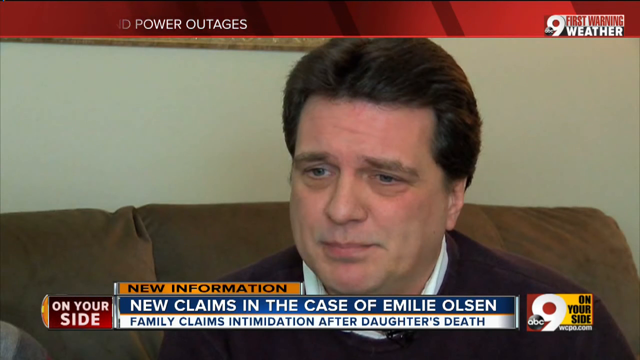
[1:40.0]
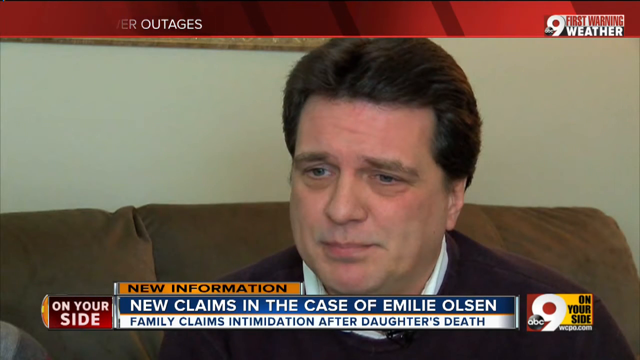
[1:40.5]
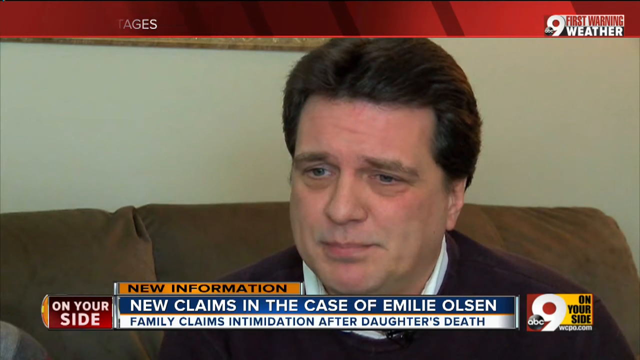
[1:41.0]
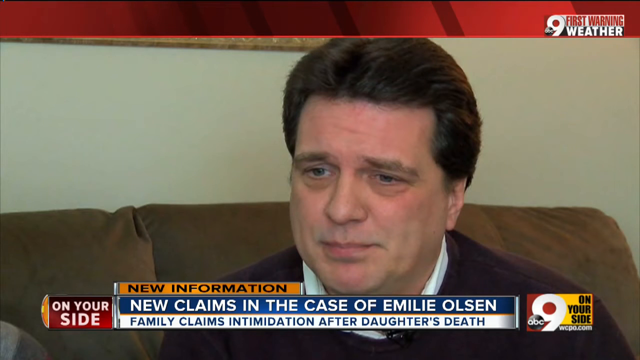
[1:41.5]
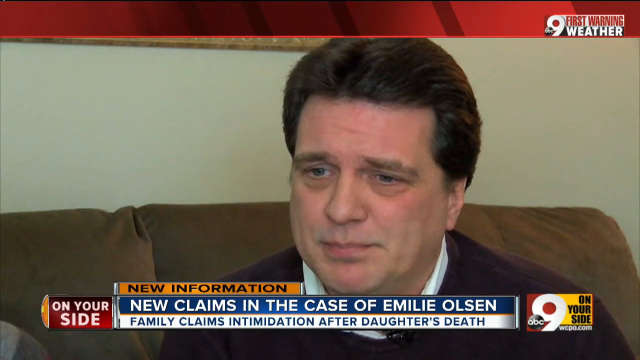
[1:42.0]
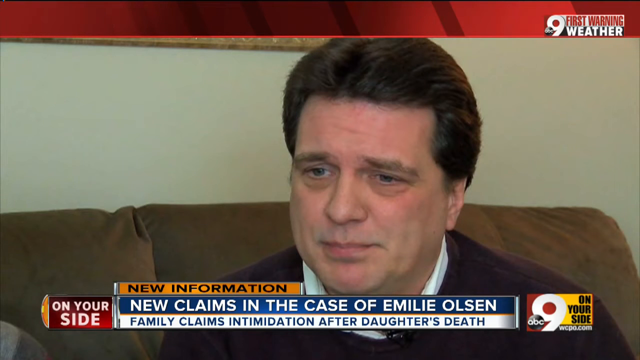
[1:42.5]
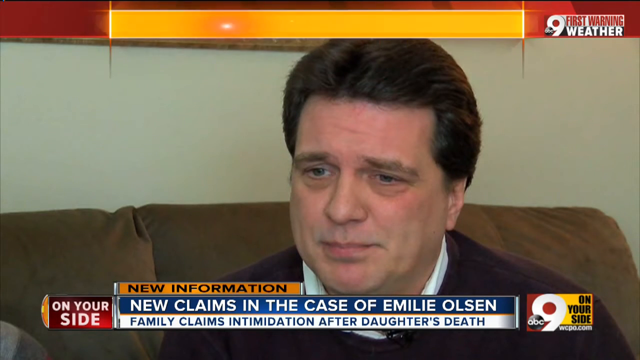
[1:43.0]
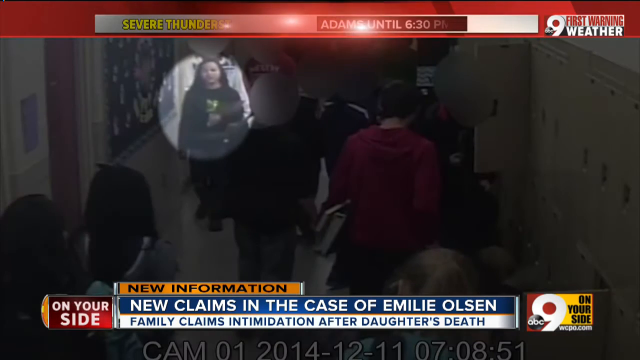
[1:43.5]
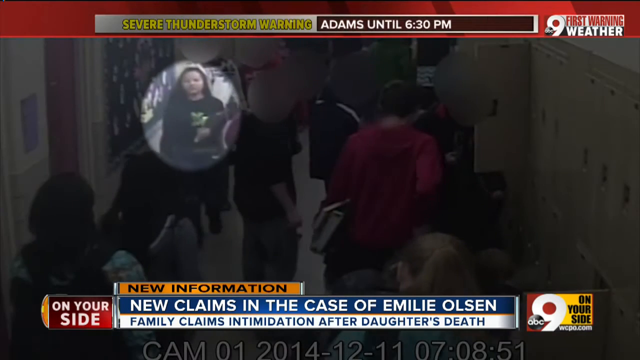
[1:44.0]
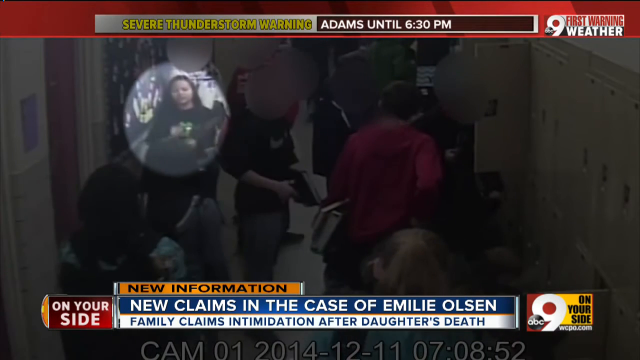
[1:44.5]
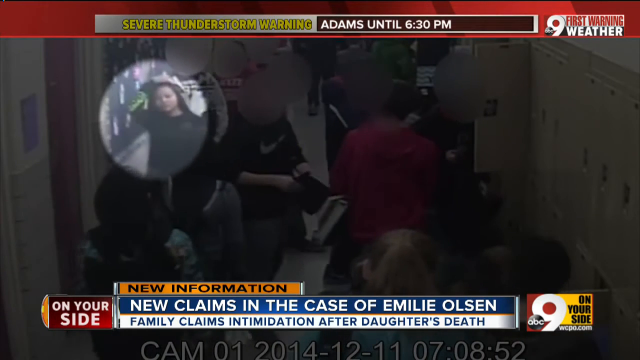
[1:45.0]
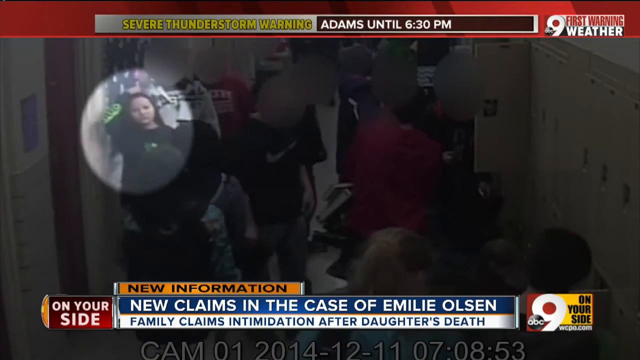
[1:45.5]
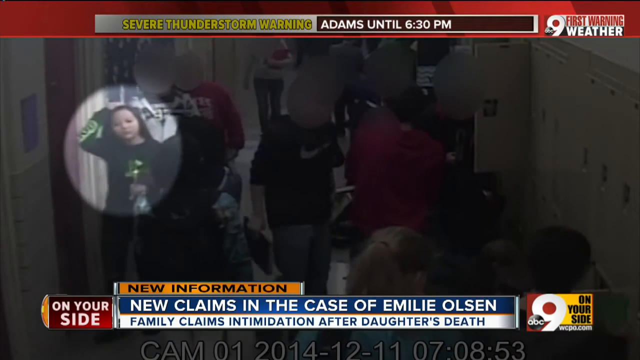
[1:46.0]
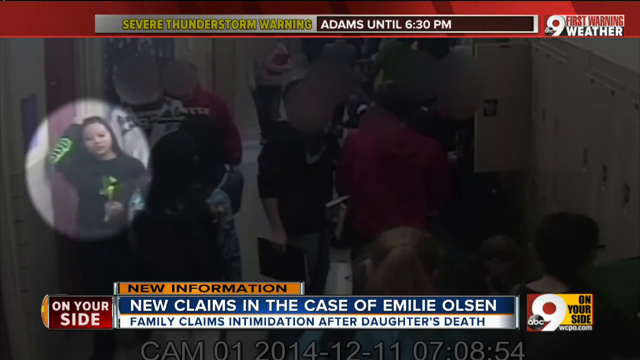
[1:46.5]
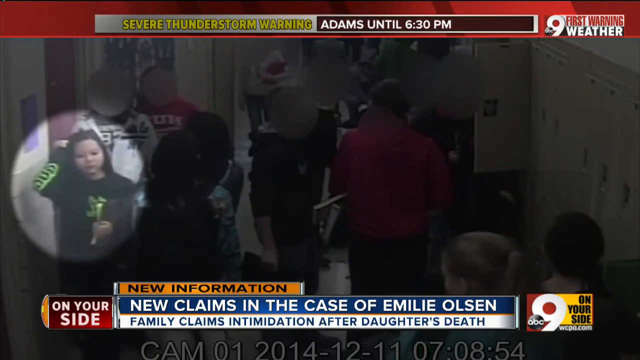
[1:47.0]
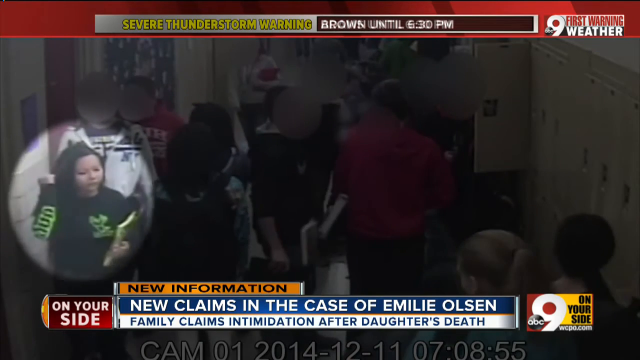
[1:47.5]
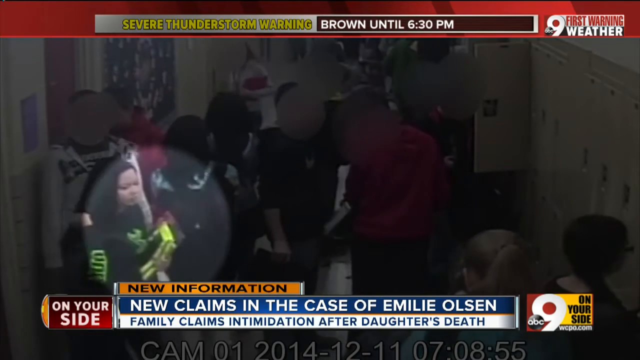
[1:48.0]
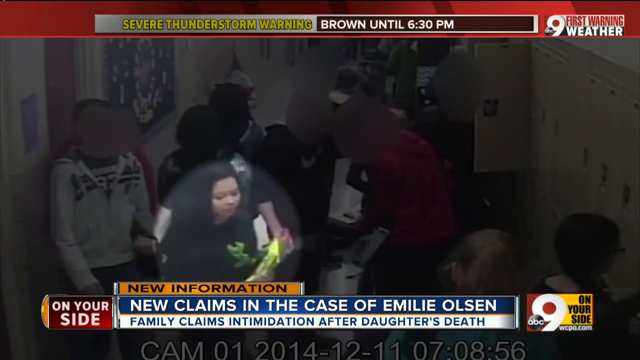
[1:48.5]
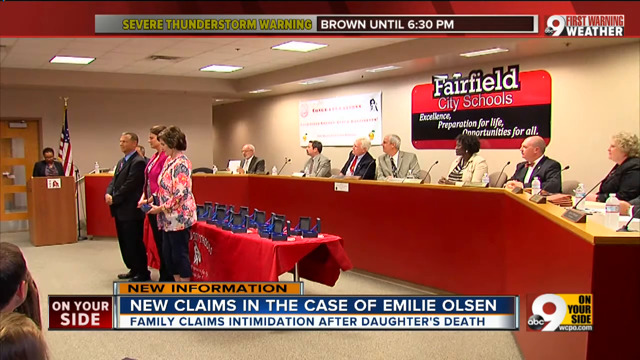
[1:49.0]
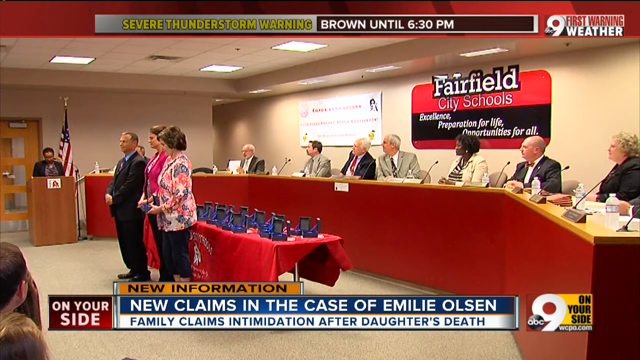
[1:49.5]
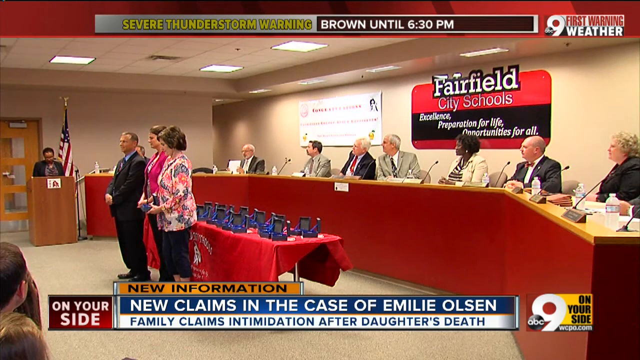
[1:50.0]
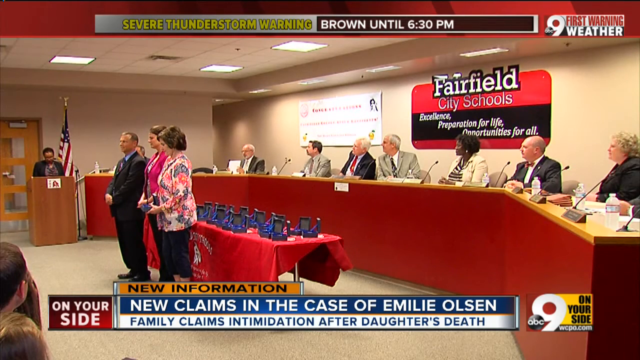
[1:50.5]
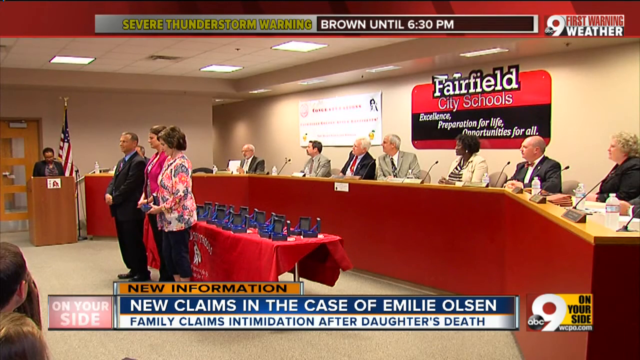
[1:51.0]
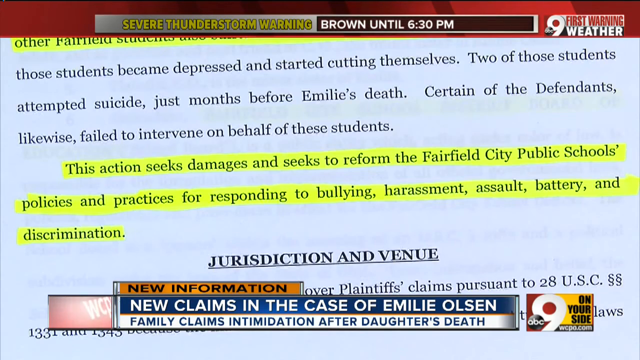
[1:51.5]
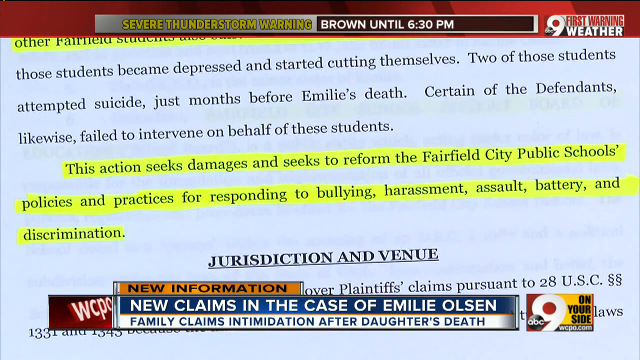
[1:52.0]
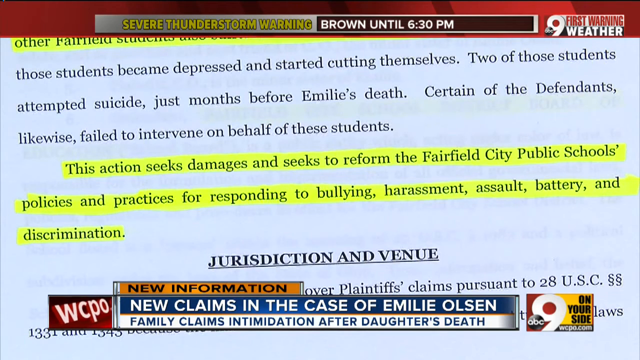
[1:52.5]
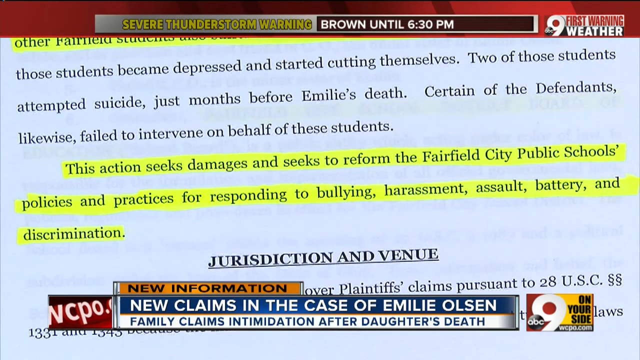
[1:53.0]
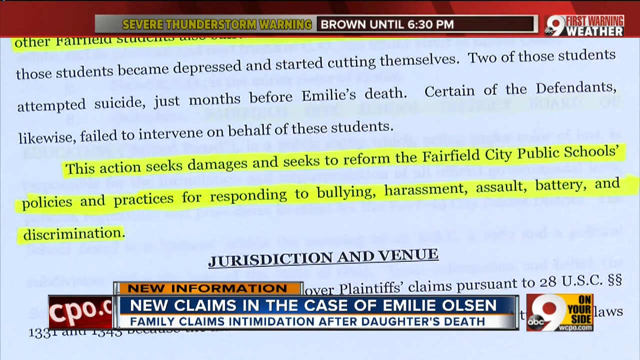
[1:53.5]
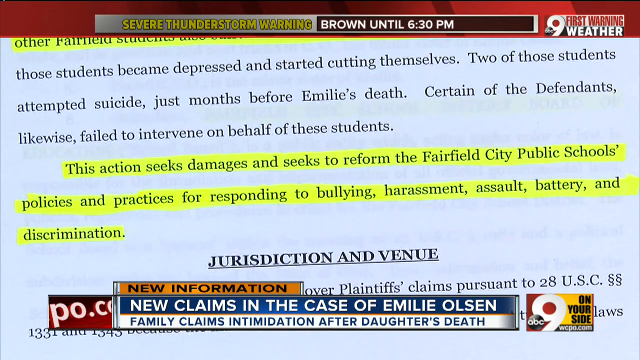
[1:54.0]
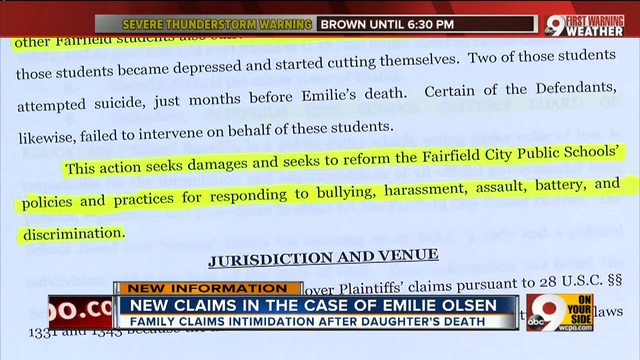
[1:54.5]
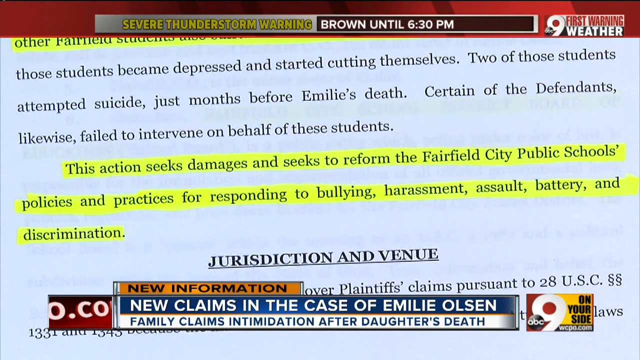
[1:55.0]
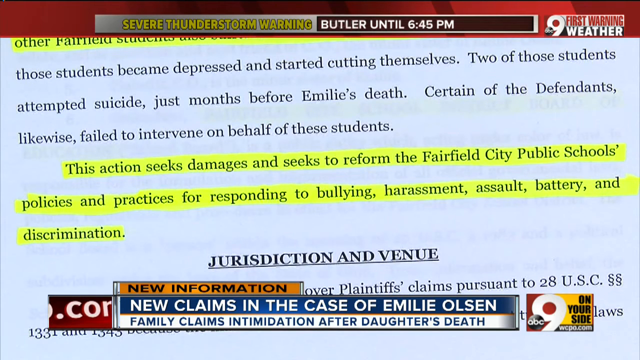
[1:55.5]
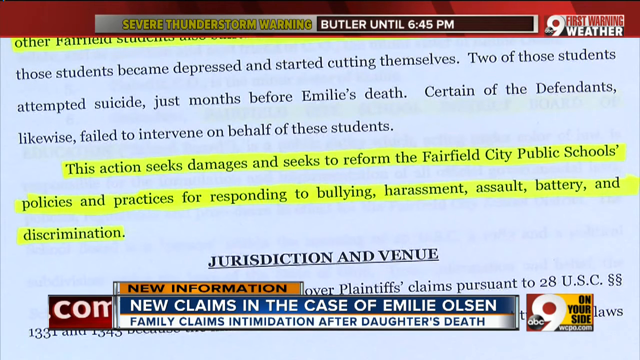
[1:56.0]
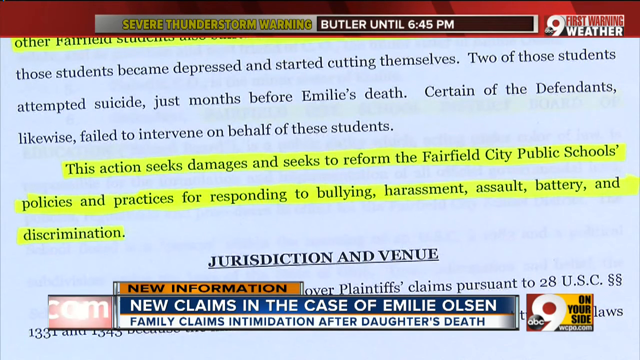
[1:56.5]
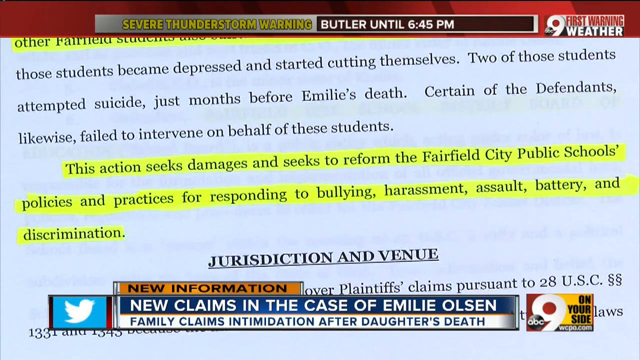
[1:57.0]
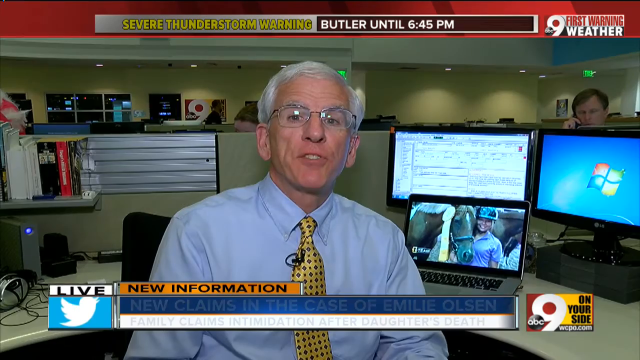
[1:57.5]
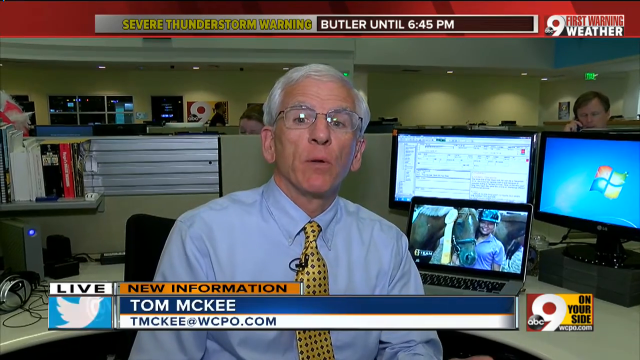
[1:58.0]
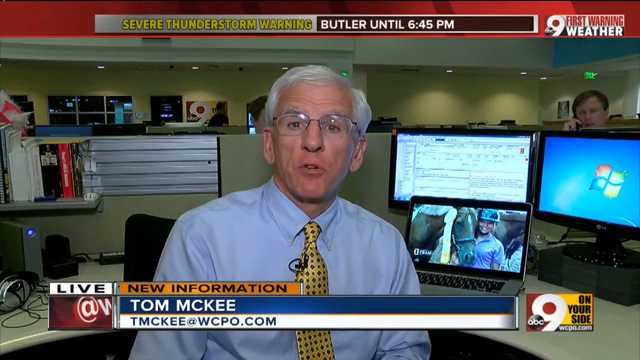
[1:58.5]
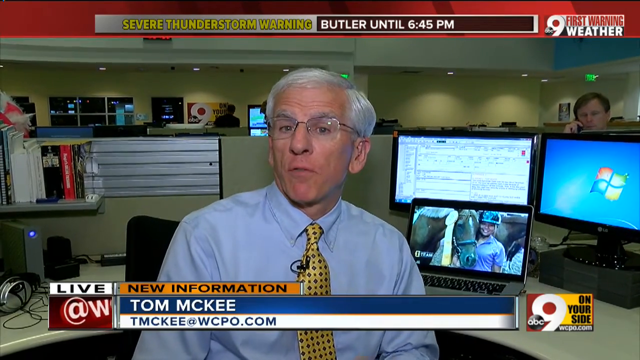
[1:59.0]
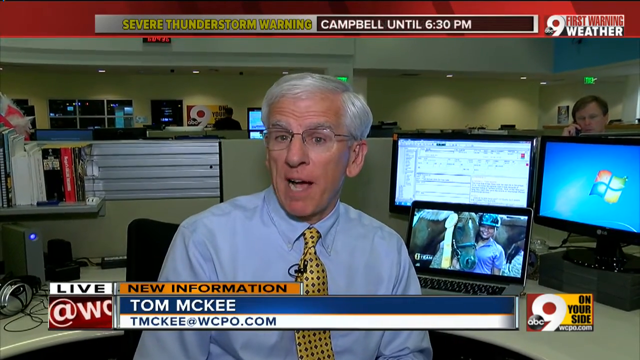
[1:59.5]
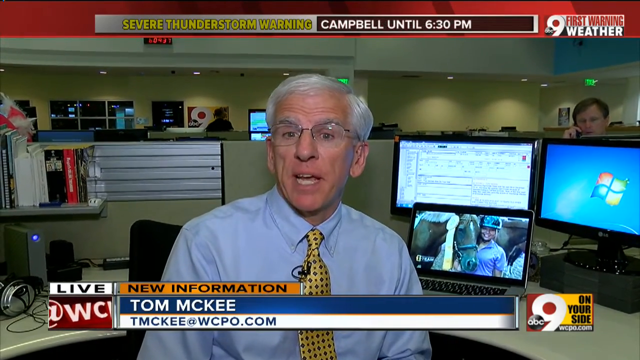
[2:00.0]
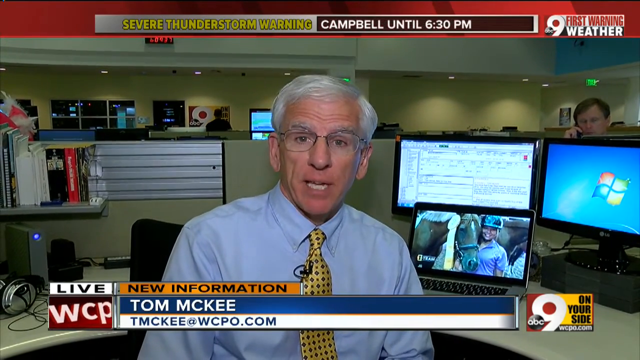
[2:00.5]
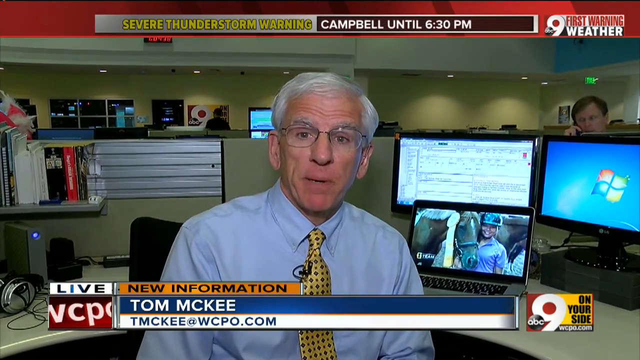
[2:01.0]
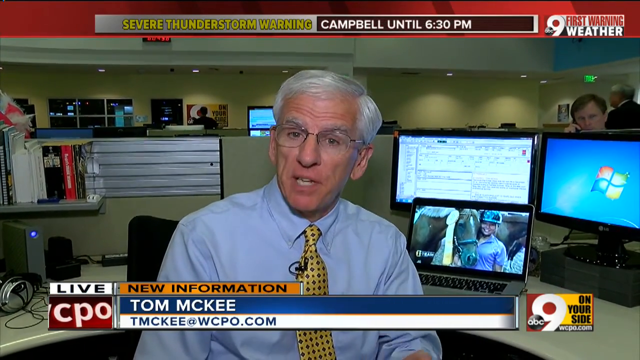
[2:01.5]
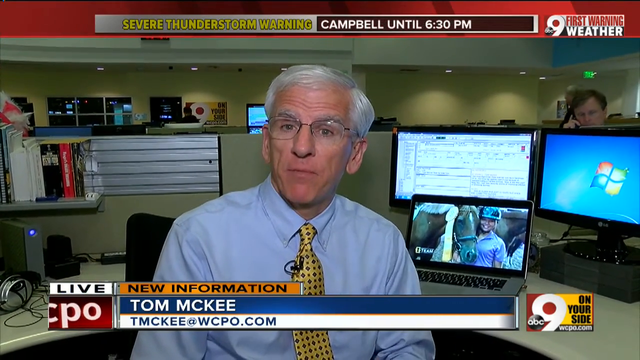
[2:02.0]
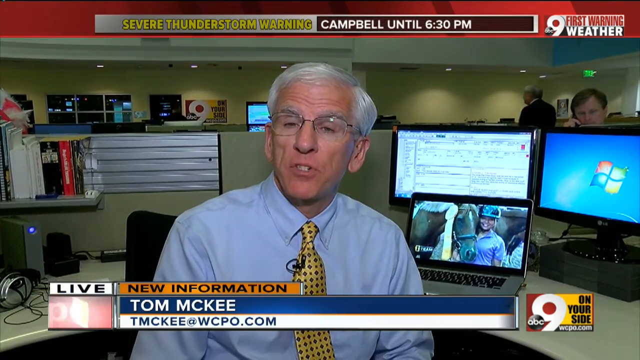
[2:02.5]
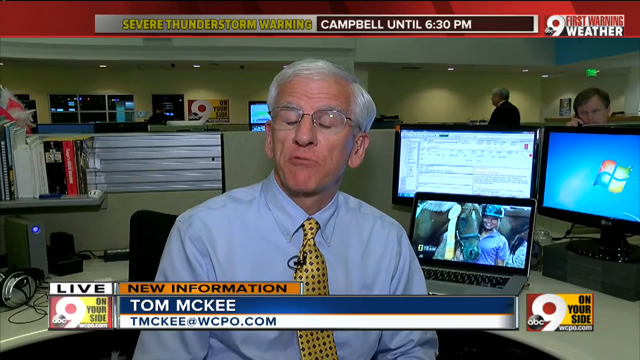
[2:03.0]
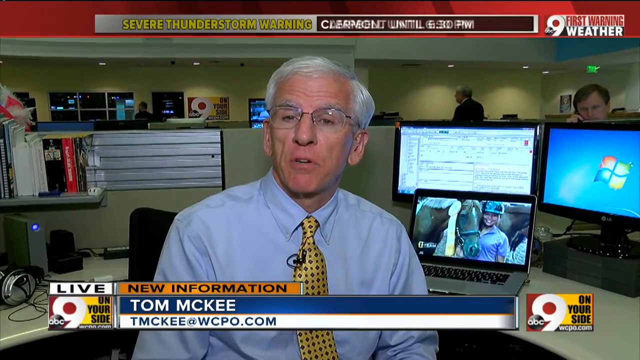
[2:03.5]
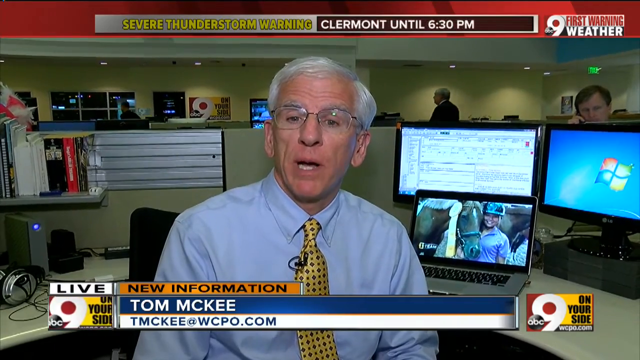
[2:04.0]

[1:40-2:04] A person's hair is shown, and the video transitions to a school-like hallway with lockers and various other school settings, with one of the people highlighted by being circled. Another screen shows this individual kind of walking down the hall. Then a screen shows Fairfields County School and a kind of council being held. A screen of highlighted text follows, mentioning "Fairfield City Public Schools policies and practices responding to bullying harassment". The last screen shows the man in the blue shirt with gray hair and glasses.